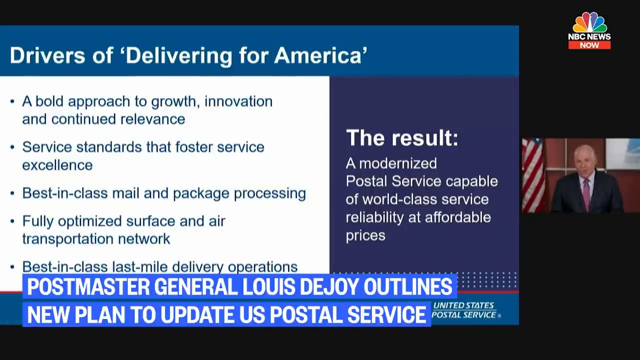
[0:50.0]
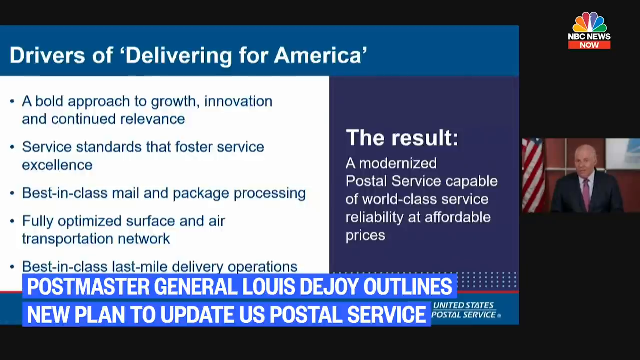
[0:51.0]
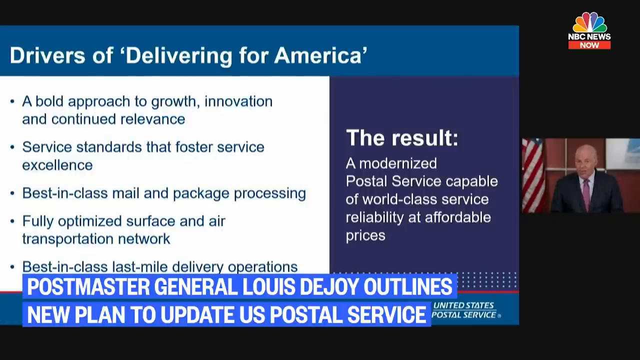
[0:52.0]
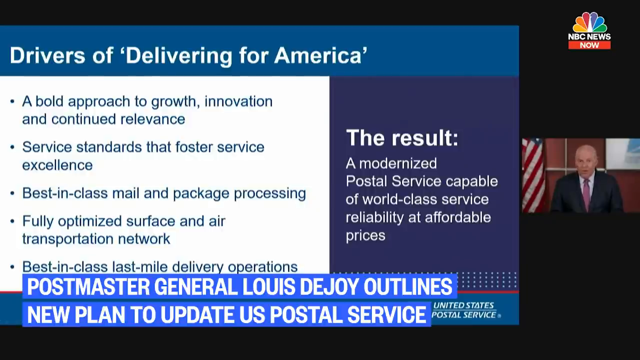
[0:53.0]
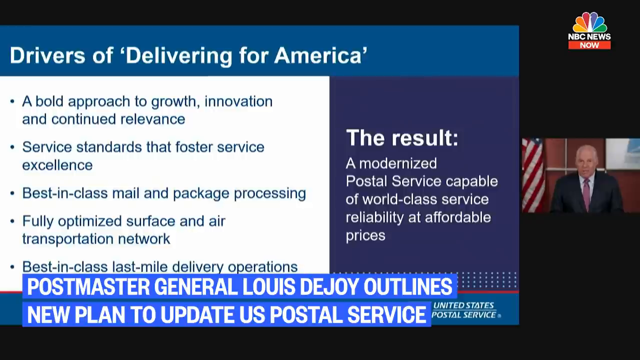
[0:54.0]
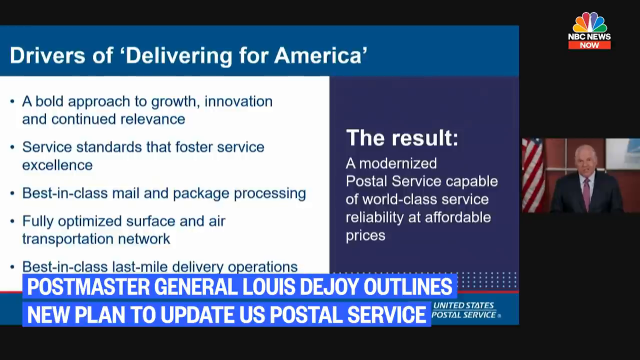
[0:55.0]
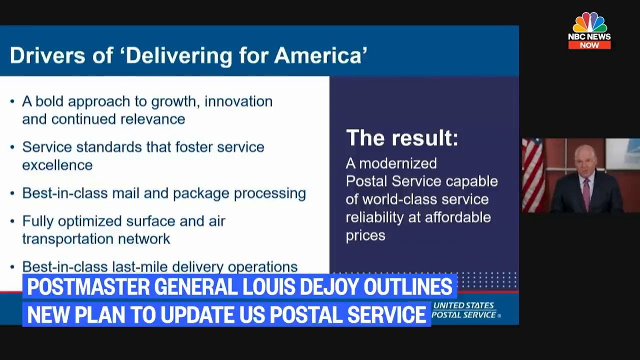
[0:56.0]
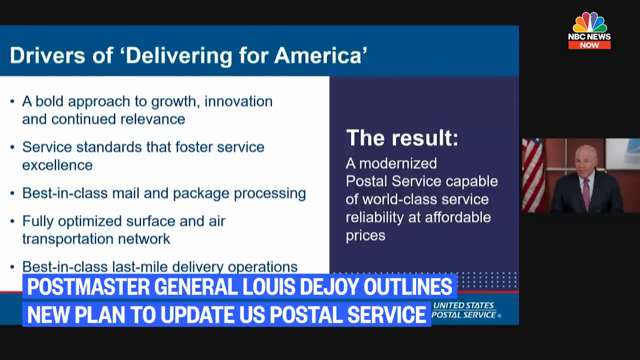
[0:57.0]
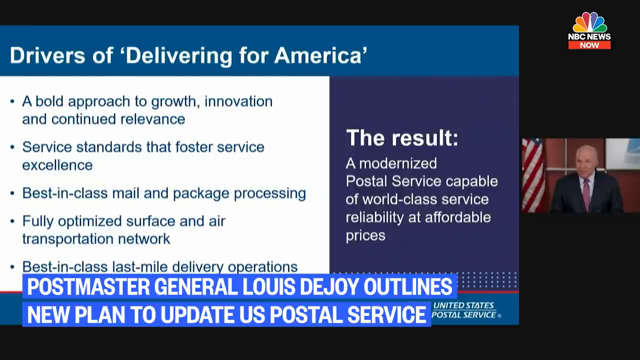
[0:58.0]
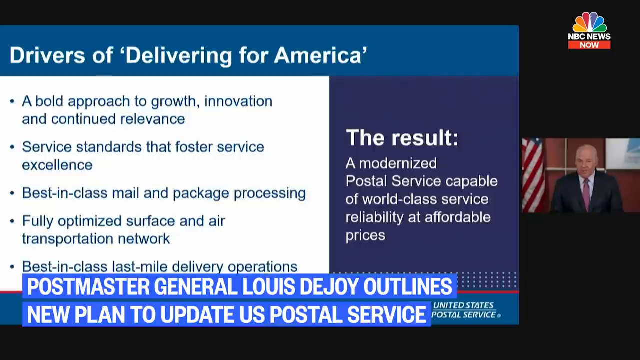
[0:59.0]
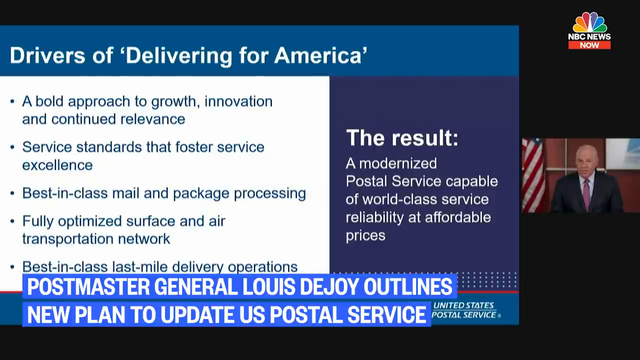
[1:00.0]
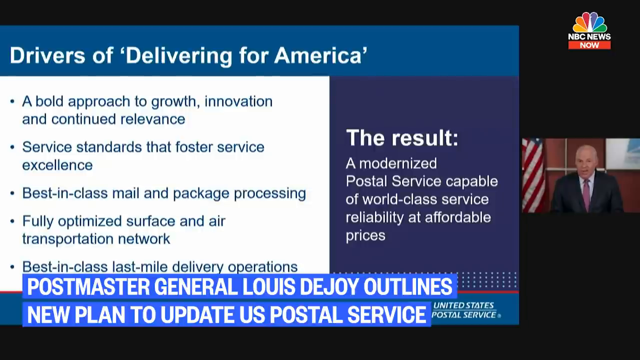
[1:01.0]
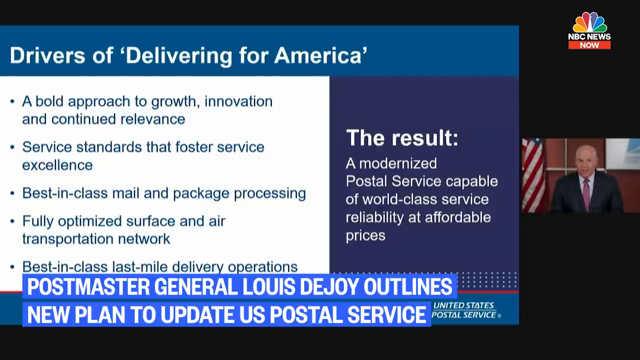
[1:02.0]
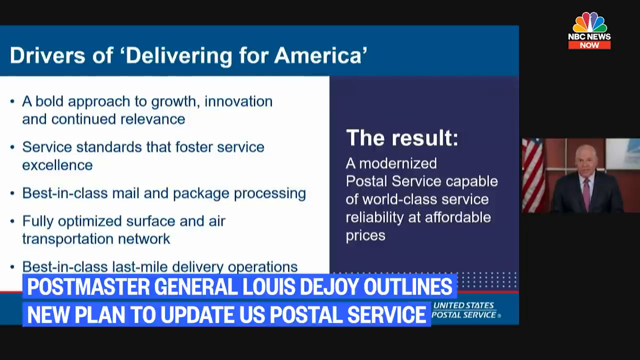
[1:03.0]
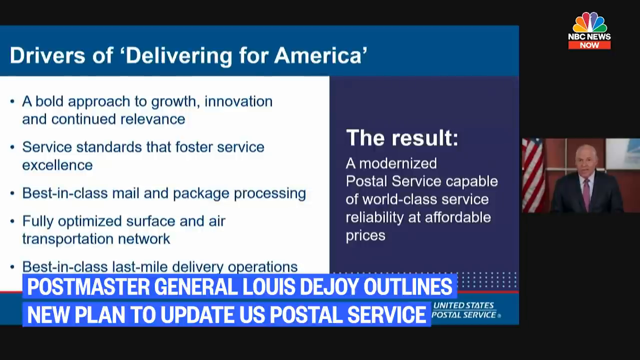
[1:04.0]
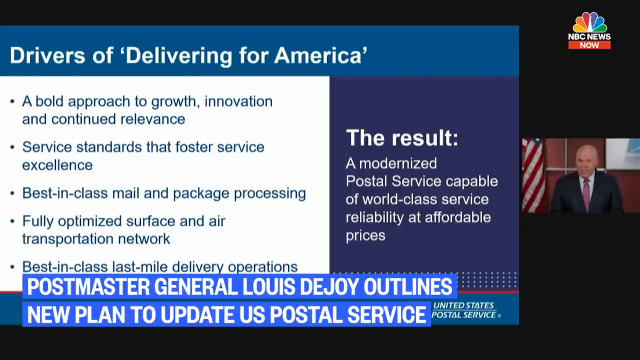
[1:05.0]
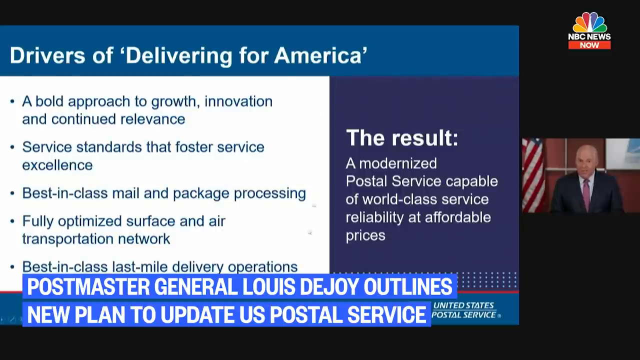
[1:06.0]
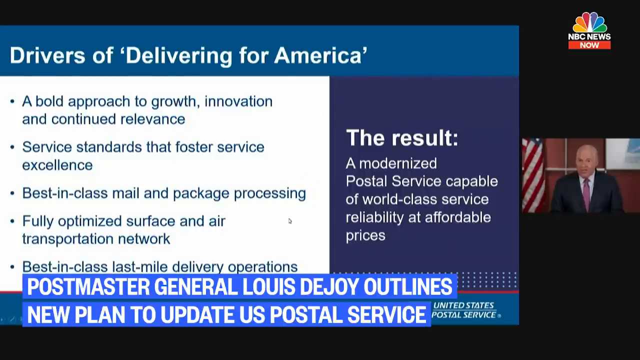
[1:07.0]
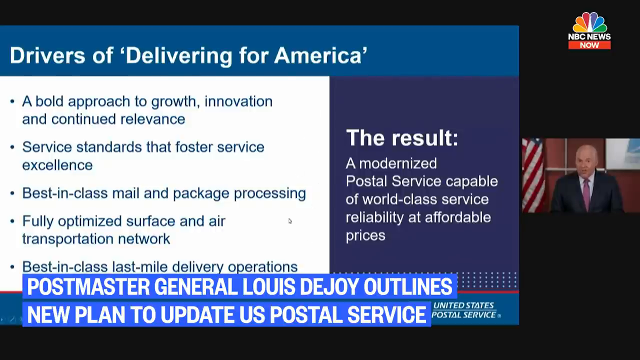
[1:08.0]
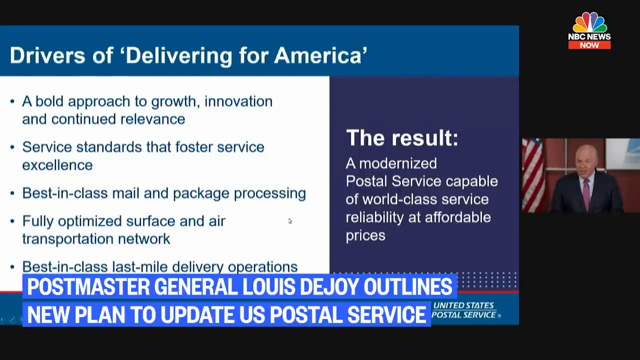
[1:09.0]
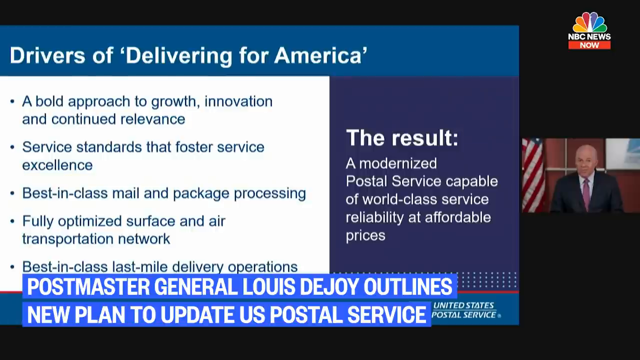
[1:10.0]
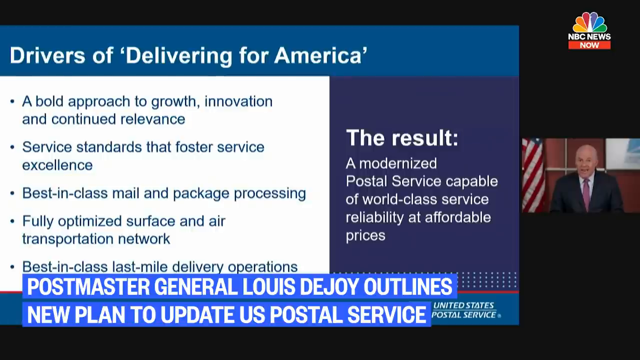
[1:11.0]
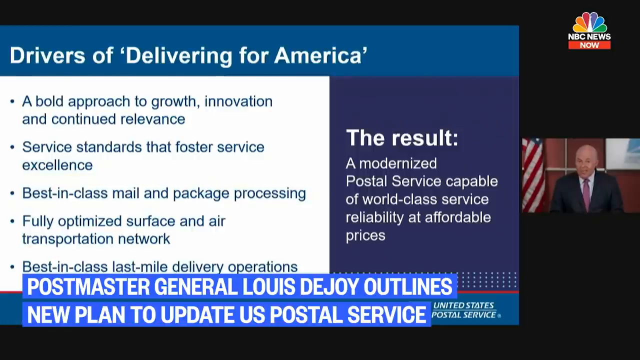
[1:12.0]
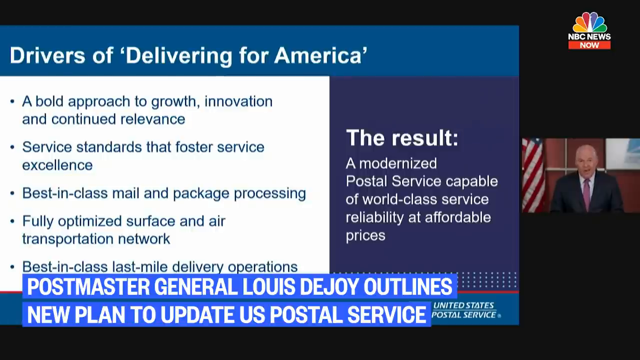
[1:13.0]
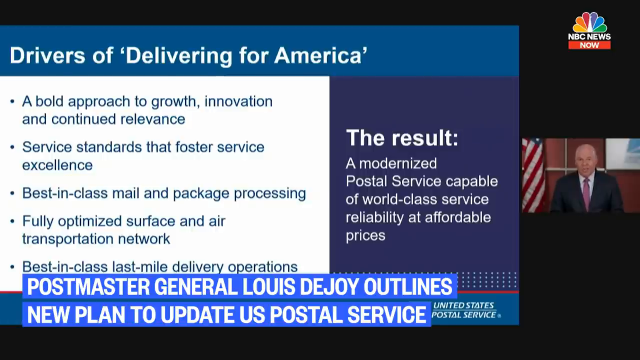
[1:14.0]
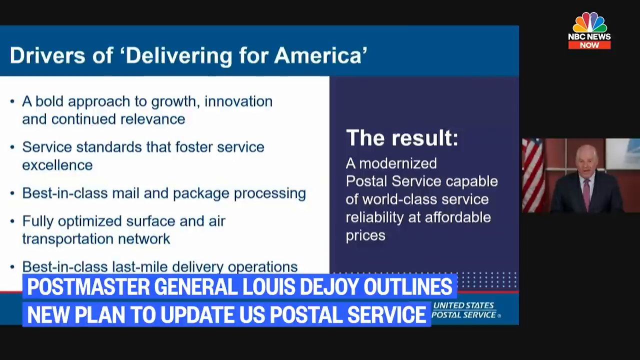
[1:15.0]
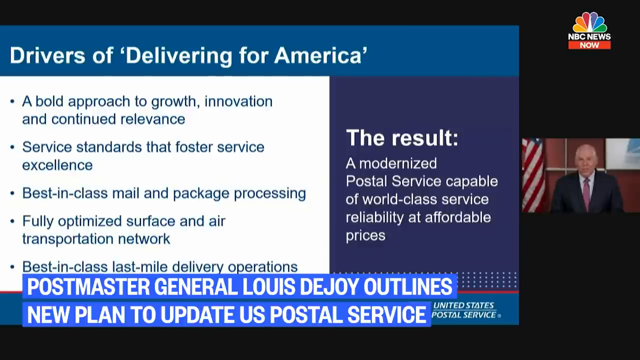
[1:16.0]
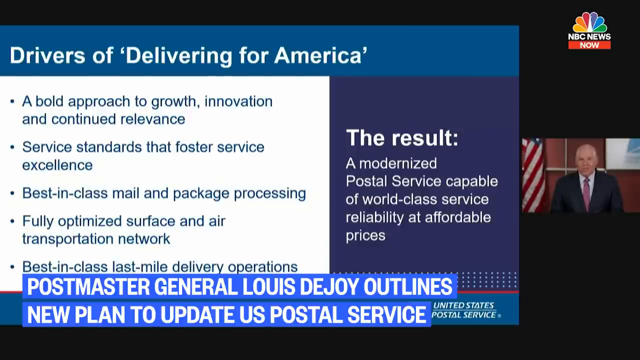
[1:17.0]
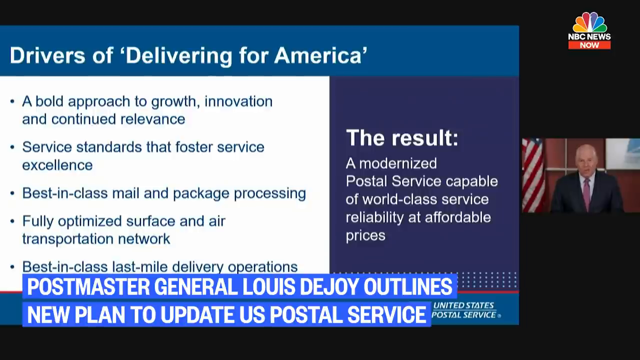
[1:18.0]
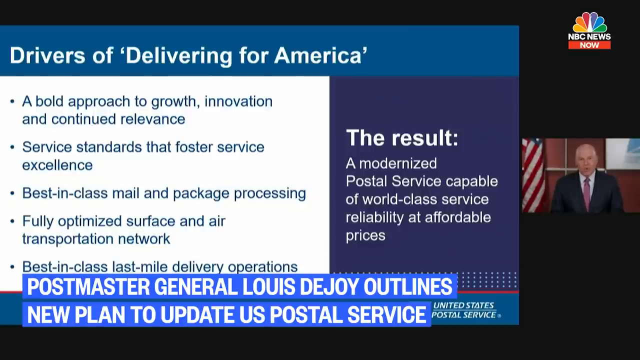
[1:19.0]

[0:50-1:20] The screen shows an image on the left and a video on the right. The image is a report by the United States Postal Service. The top of the slide has a blue border with the words "Drivers of Delivery for America." Below the border, the slide reads "A bold approach to growth, innovation, and continued relevance," then "Service standards that foster service excellence," "Best-in-class mail and package processing," "Fully optimized surface and air transportation network," and "Best-in-class last mile delivery operations." To the right, white text on a purple background reads "The result, modernized postal service, capable of world-class service reliability at affordable prices." Below all of this, an overlay reads "Postmaster General Louis DeJoy outlines new plan to update U.S. Postal Service." The video on the right shows a man talking to the camera.